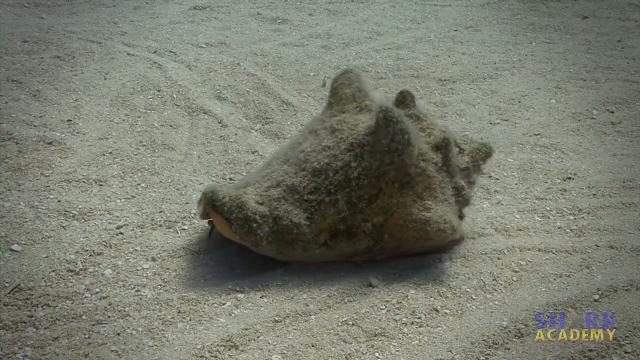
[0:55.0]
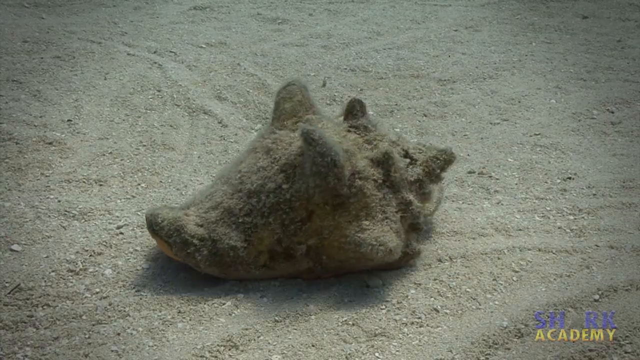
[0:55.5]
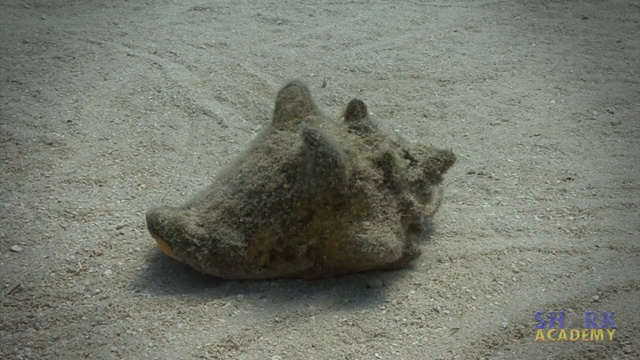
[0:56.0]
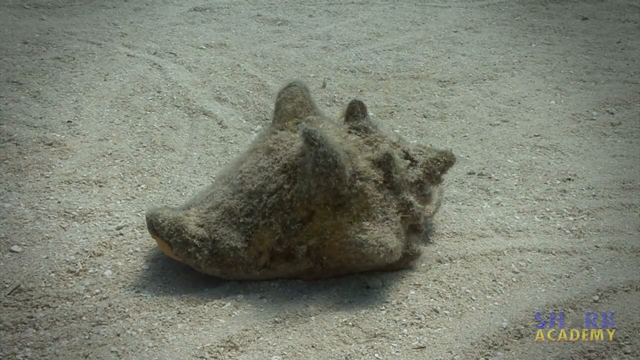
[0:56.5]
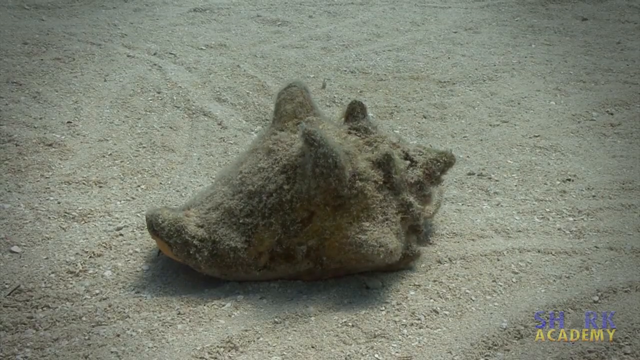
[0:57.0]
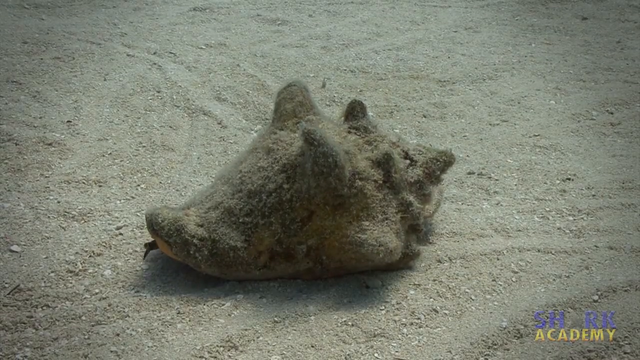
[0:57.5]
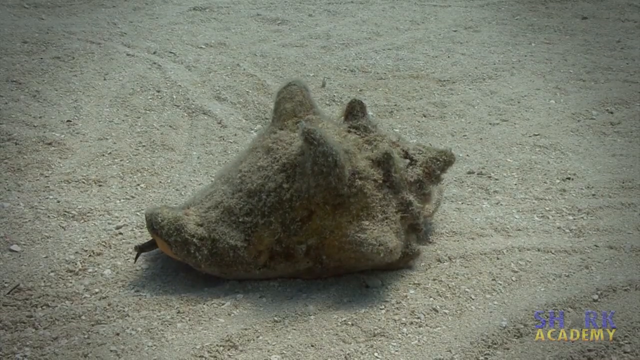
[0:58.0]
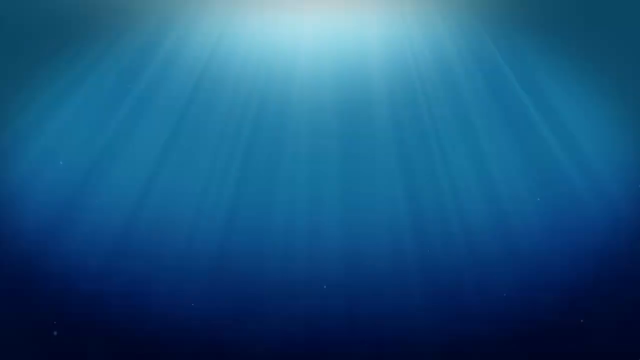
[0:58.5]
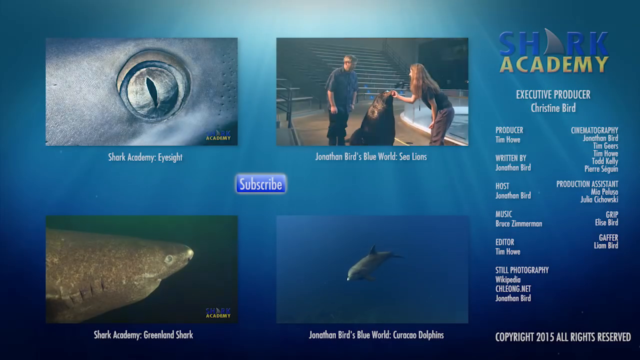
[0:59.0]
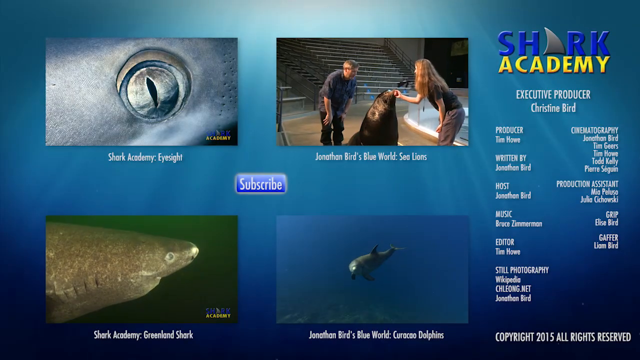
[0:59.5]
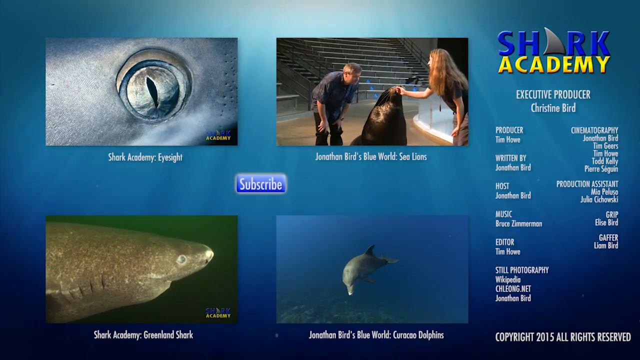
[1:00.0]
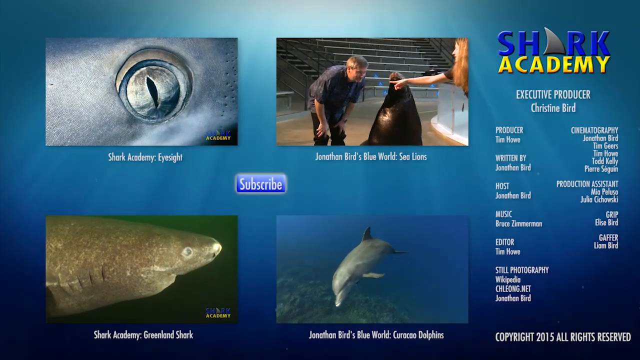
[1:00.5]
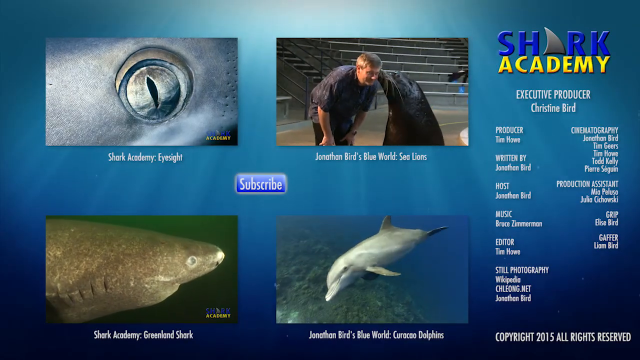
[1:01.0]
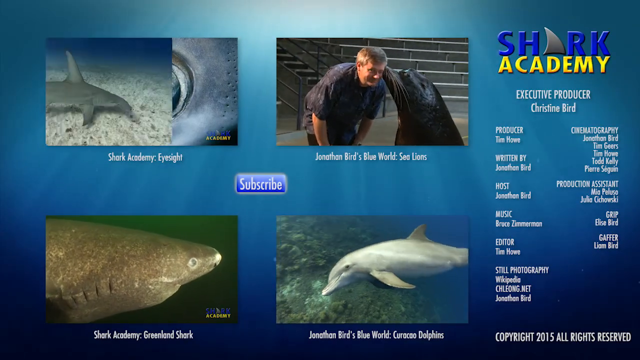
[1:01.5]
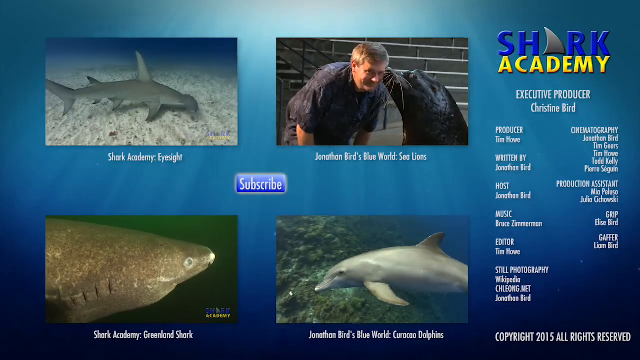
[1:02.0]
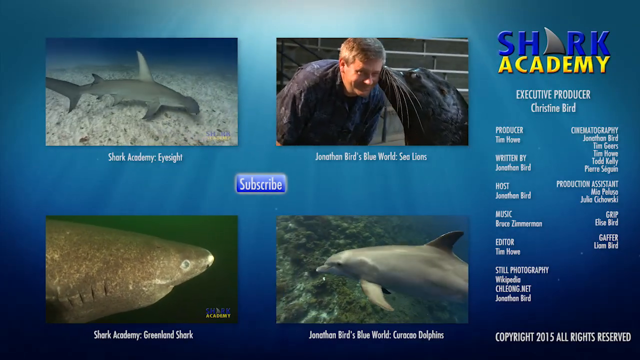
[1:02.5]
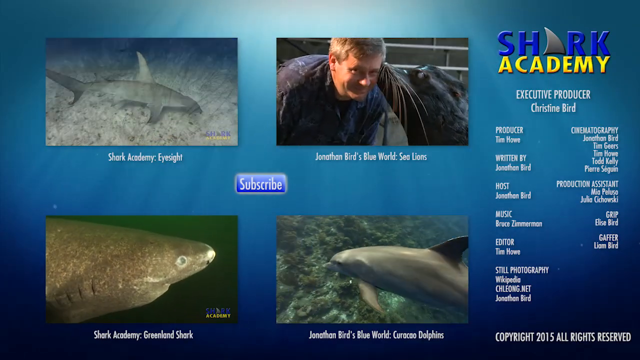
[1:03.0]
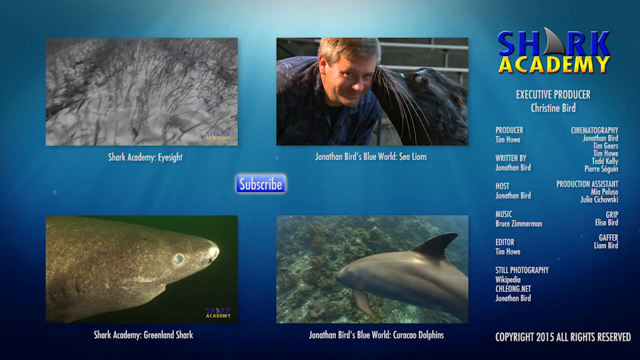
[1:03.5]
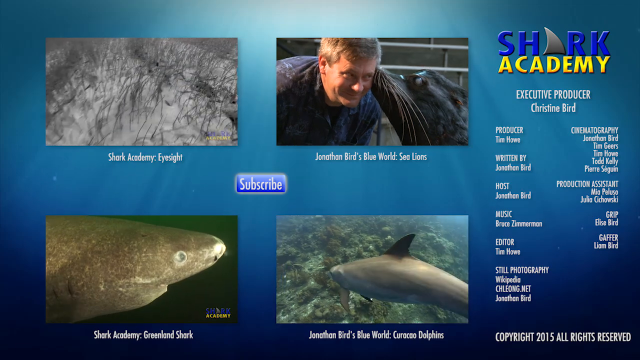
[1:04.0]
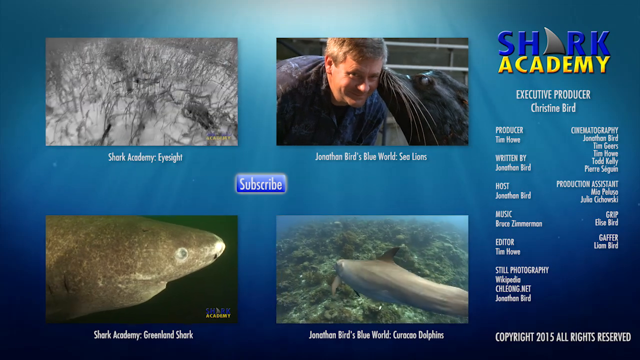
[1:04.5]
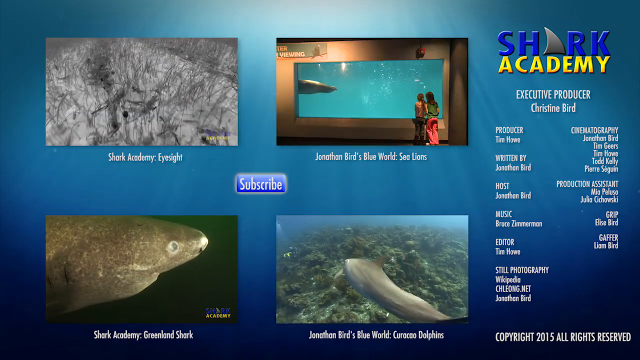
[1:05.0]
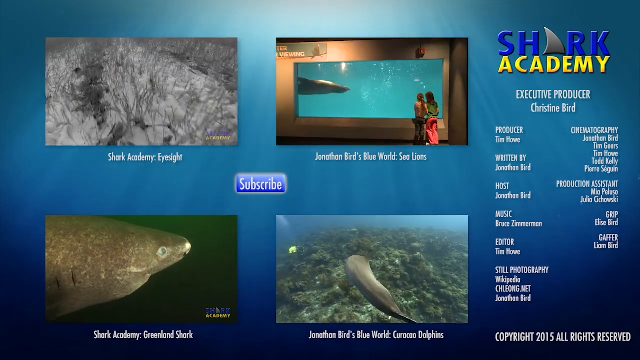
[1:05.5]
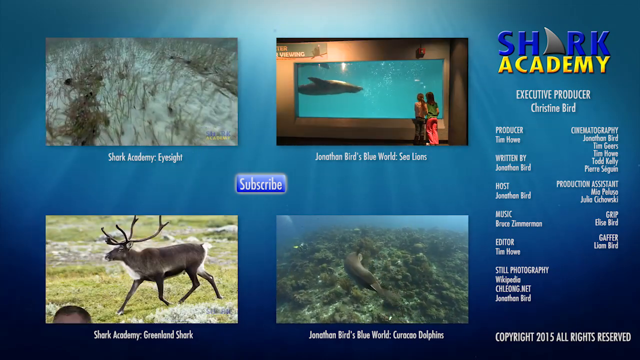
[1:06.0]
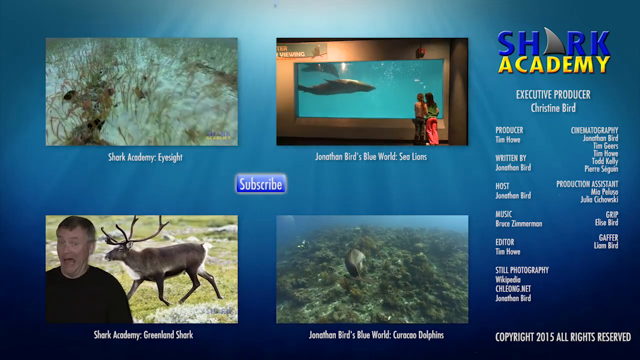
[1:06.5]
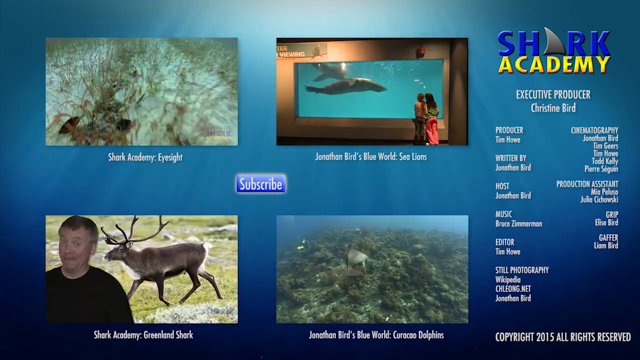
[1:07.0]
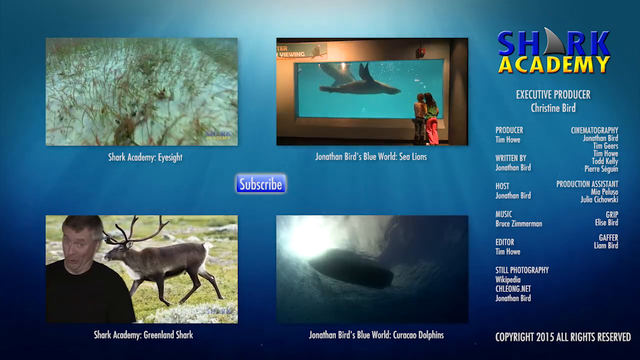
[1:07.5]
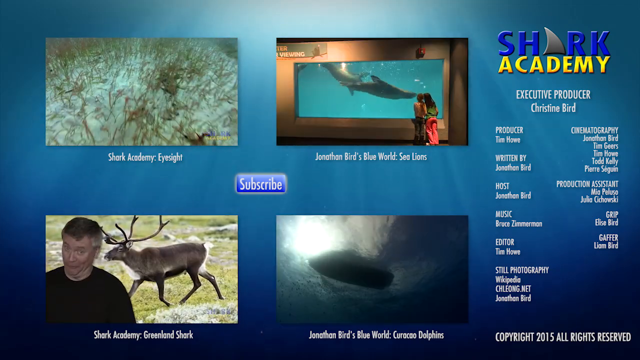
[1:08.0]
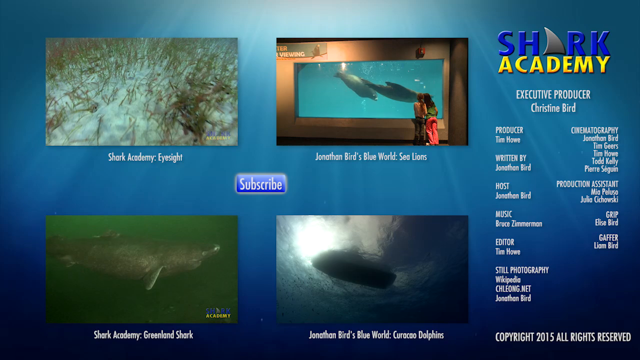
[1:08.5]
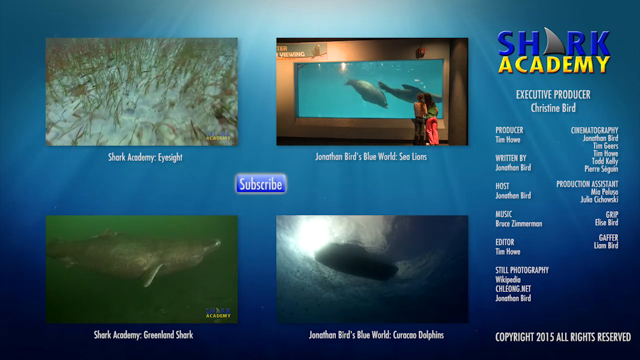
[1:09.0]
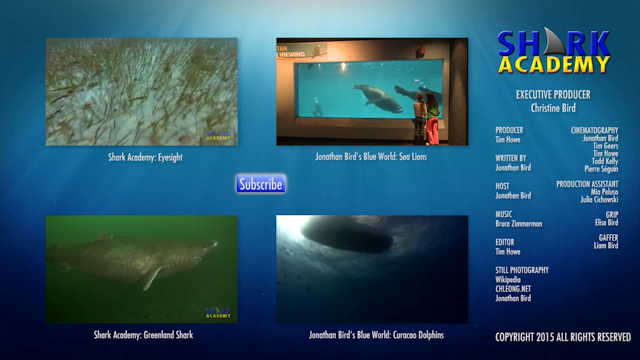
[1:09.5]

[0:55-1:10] The moss-covered snail moves a little, stops, and one of its eyes pokes out again. The scene then switches to a "Shark Academy" screen with credits, including executive producer, and four pictures beside it. The top-left picture begins with a great big fish eye, then shows a shark and then the ocean floor. The top-right picture says "Jonathan Bird's Blue World" and shows sea lions: a sea lion kisses Jonathan Bird's temple, and then sharks or sea lions are watched through viewing glass. The bottom-left picture shows a shark.